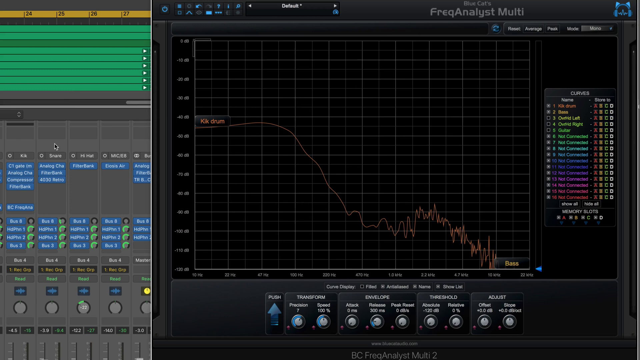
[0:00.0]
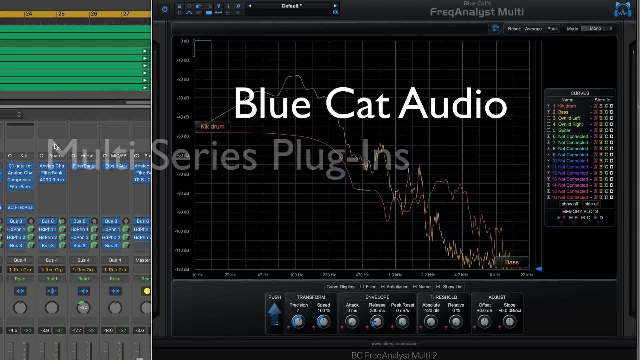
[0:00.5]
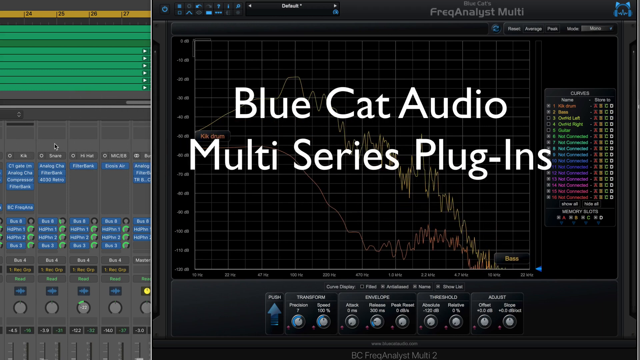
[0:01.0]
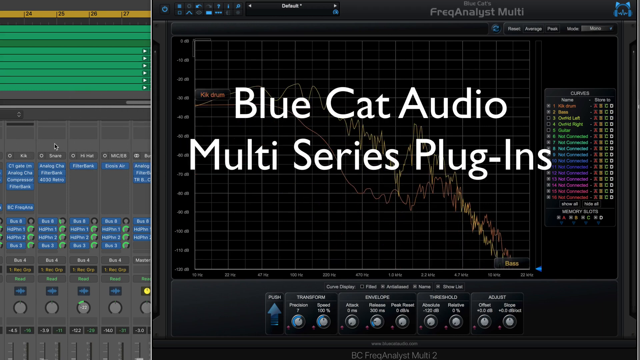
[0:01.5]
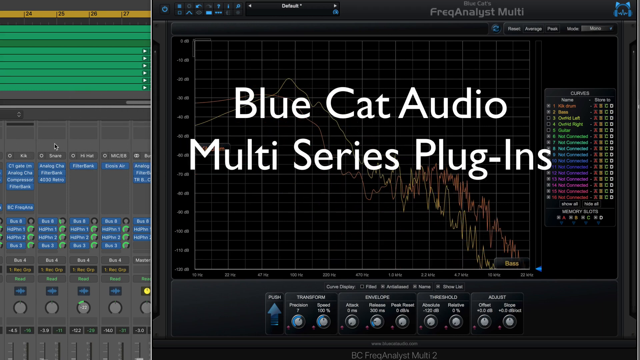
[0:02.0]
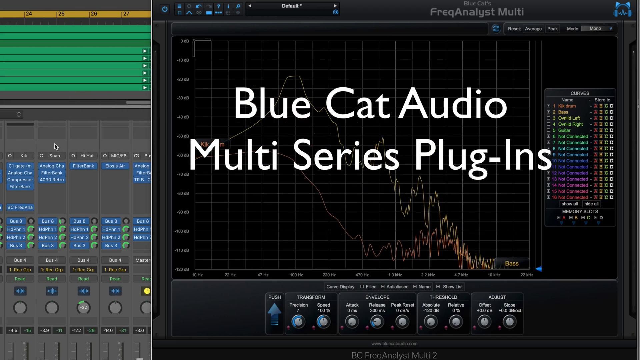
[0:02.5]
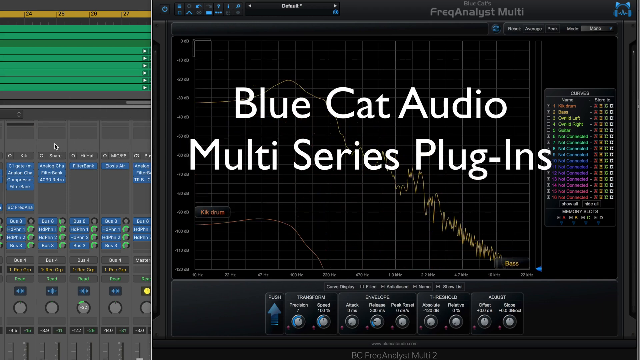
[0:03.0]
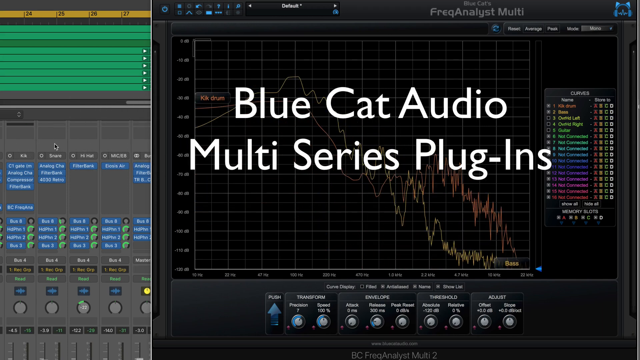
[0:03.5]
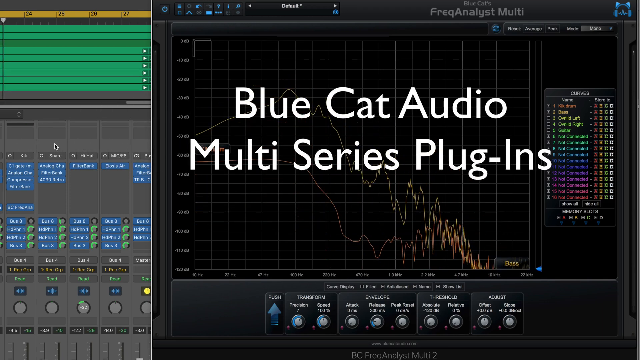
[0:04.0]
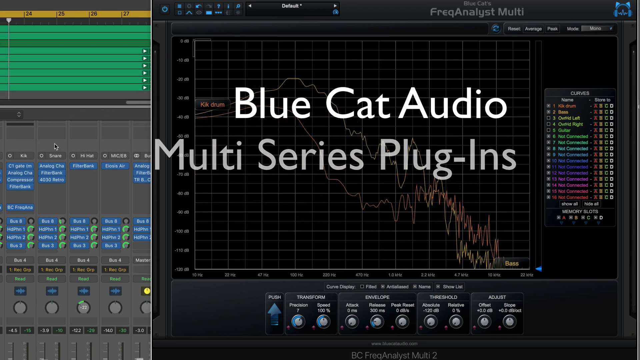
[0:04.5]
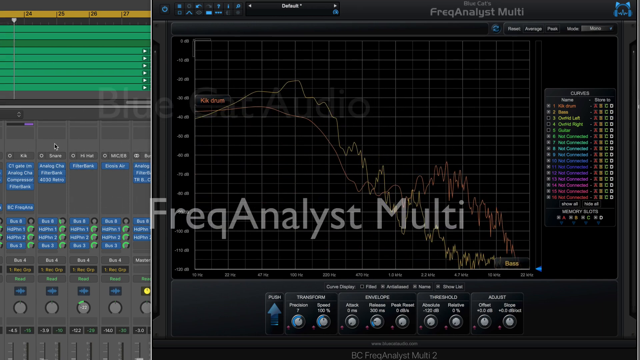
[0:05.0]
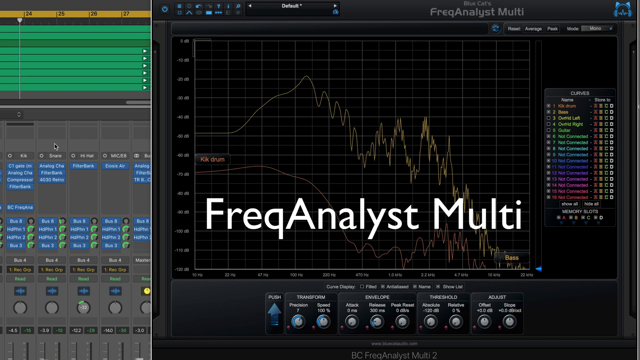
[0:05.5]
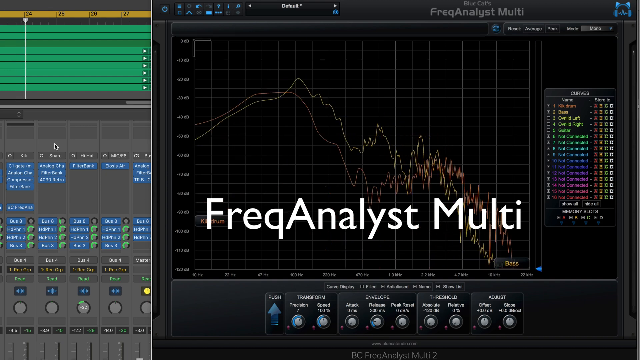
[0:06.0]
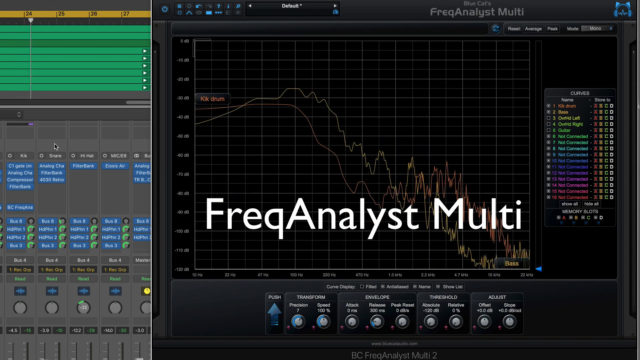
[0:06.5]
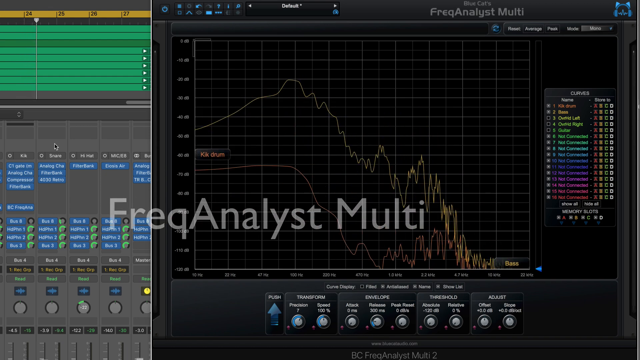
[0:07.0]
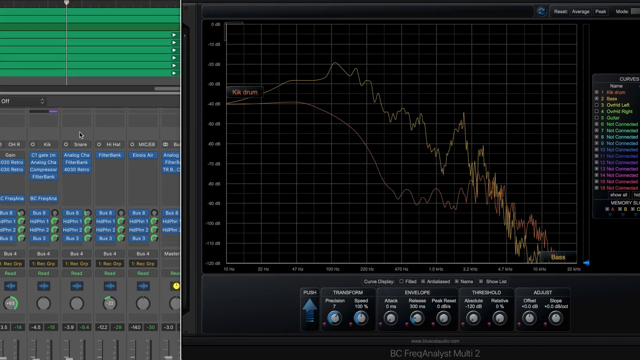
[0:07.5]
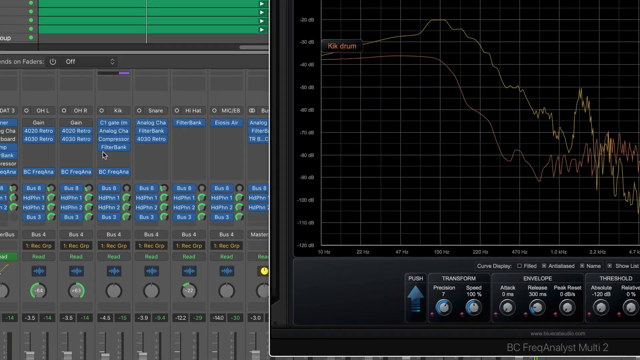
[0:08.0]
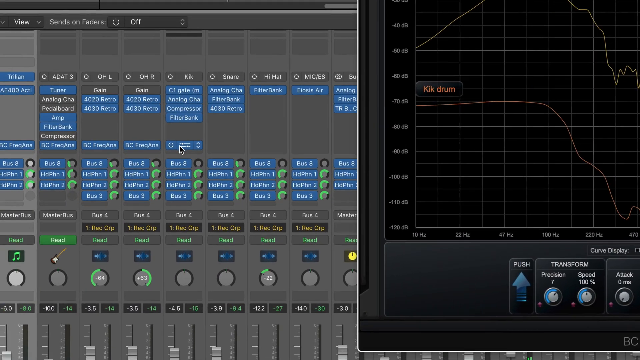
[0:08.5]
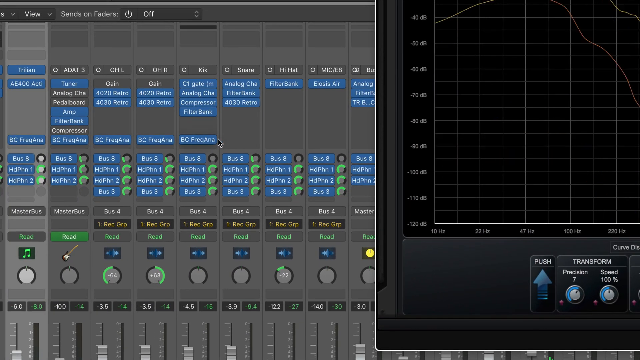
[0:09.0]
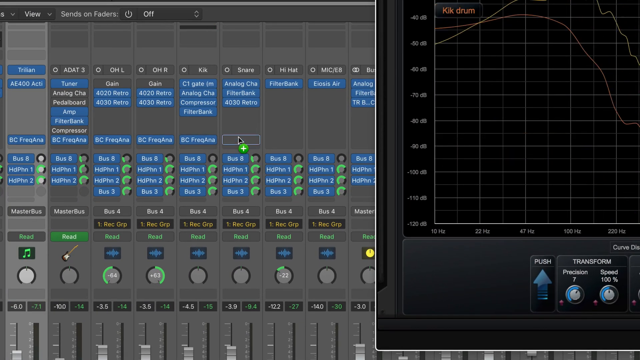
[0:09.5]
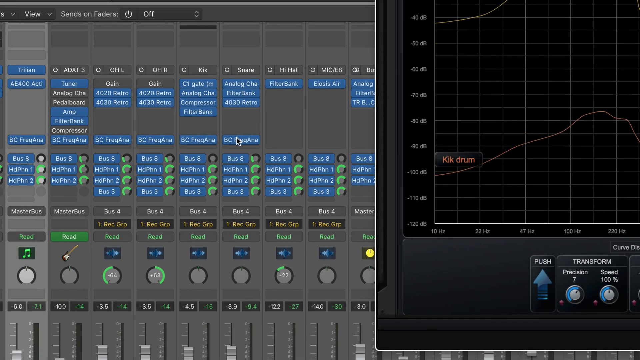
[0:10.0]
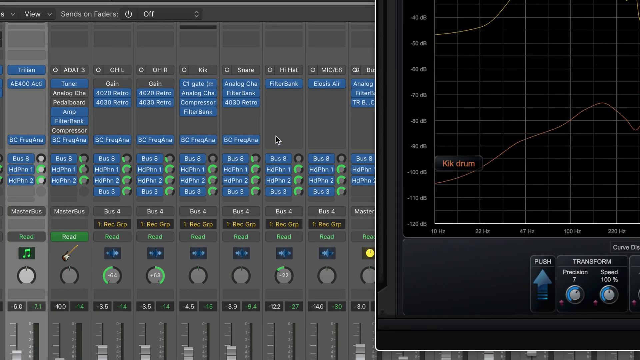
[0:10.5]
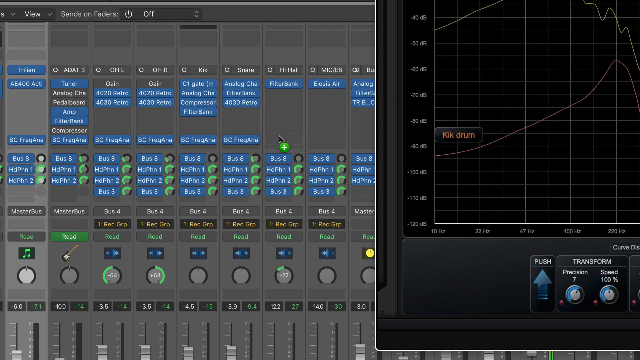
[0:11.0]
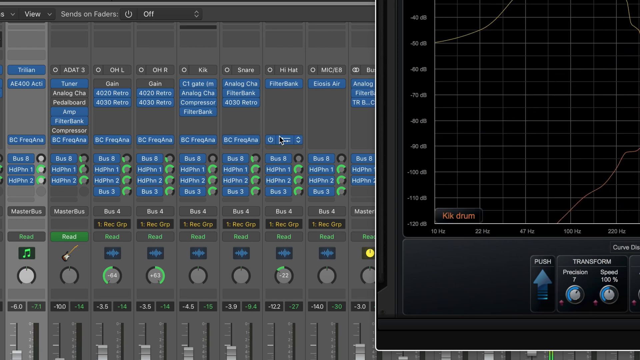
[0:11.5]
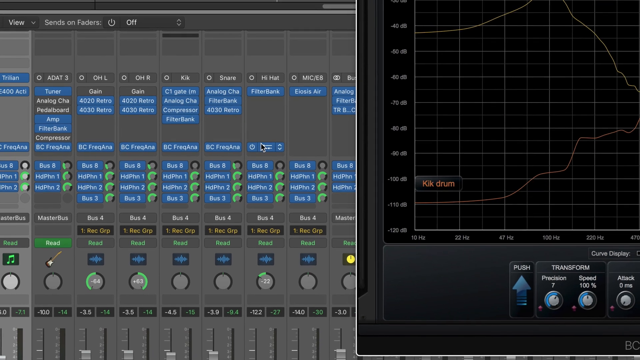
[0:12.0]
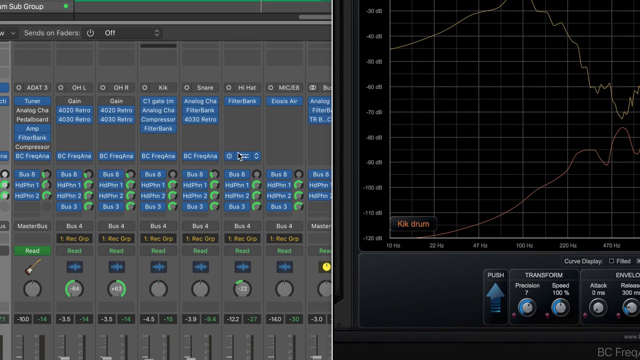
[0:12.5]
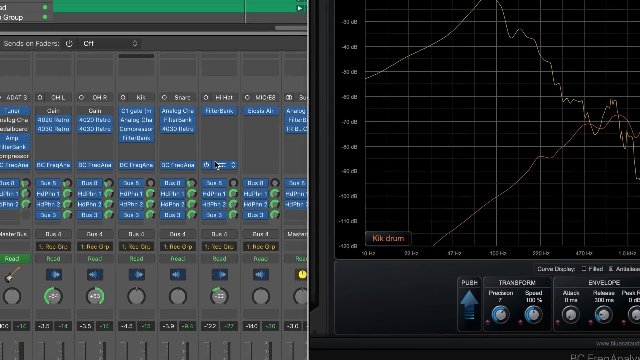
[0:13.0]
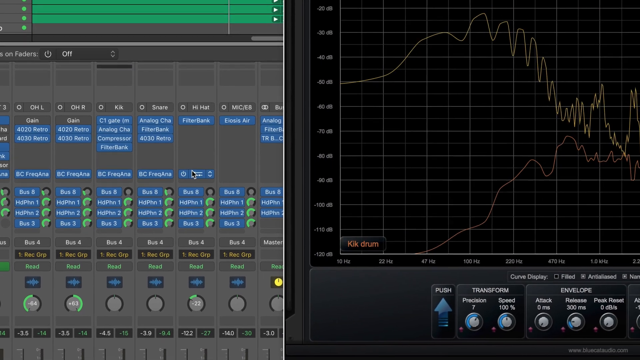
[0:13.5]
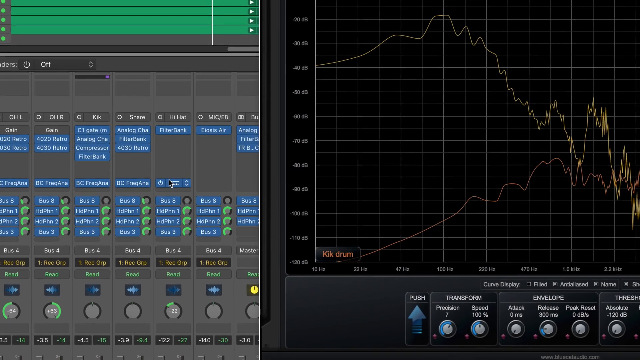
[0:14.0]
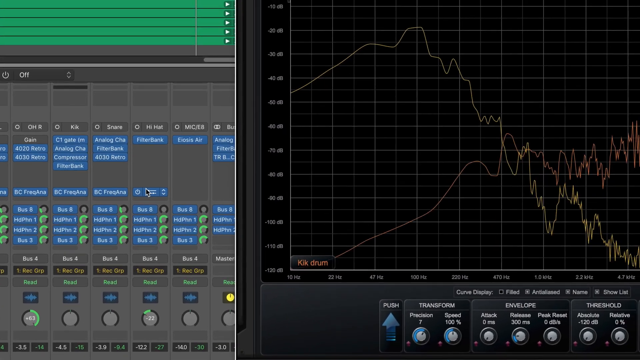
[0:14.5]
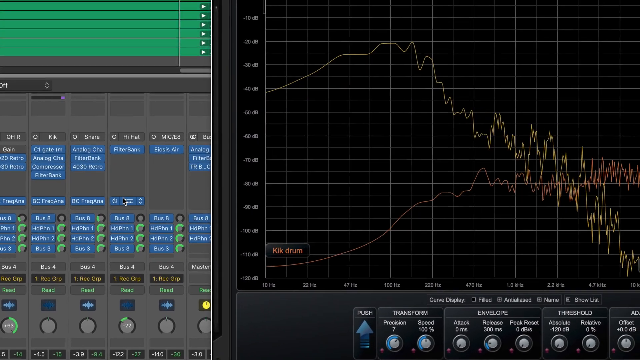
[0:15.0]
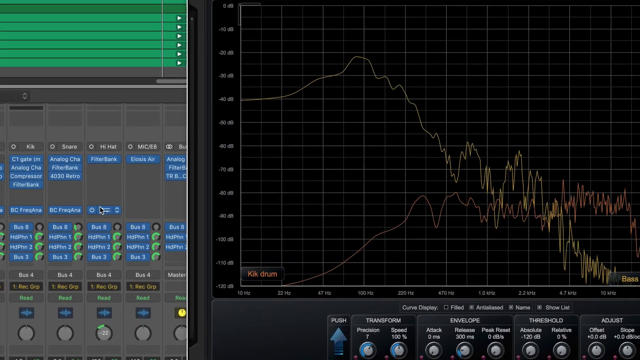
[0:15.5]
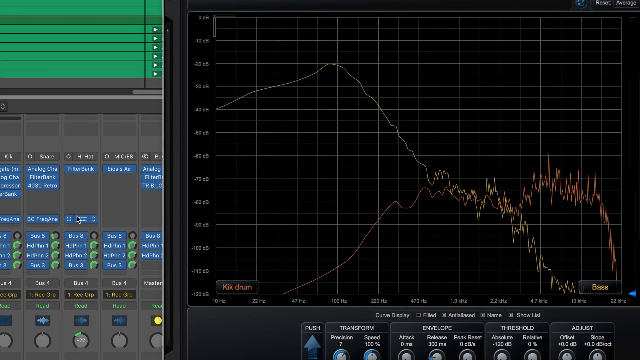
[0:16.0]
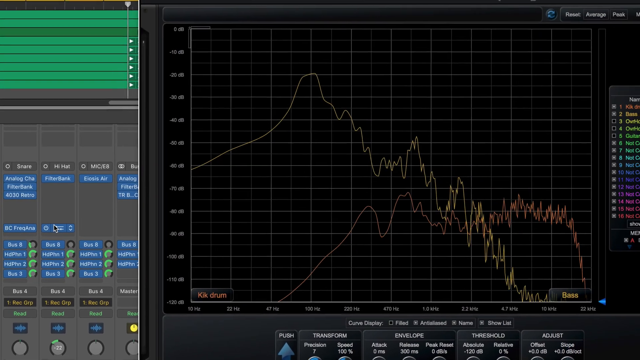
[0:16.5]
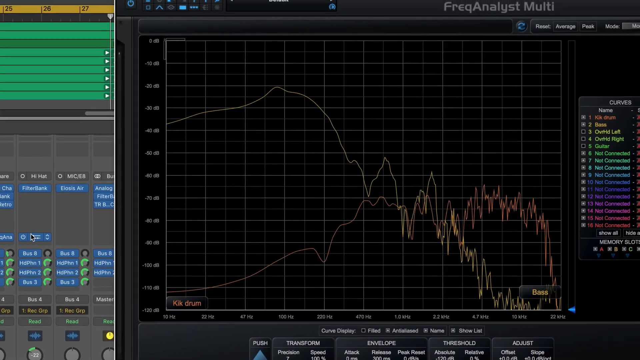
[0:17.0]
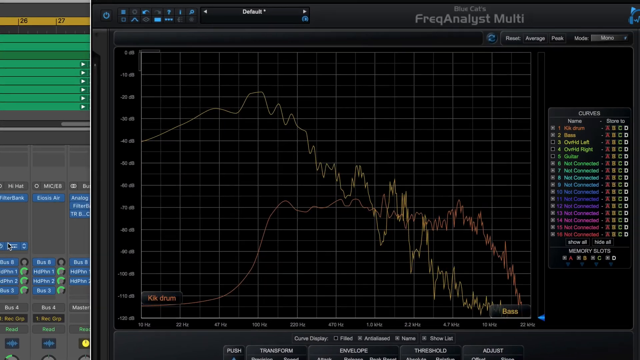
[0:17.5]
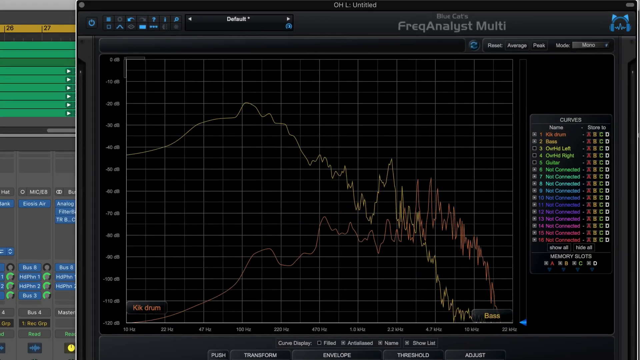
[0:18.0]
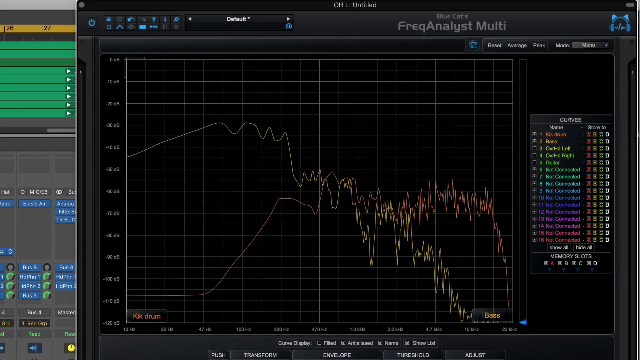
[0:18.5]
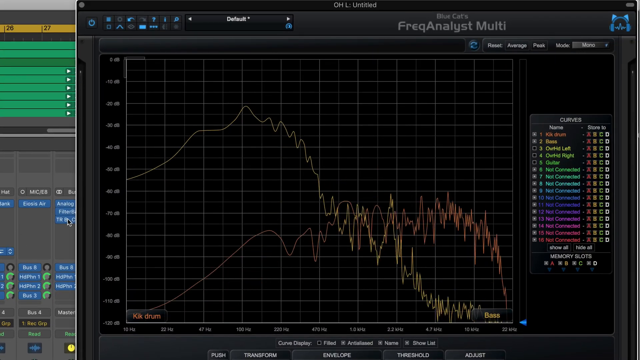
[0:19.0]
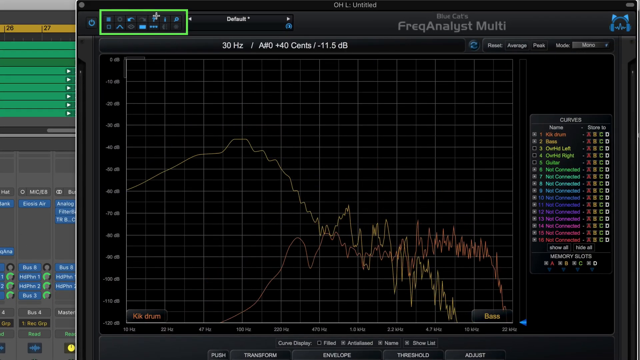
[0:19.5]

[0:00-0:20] A large rectangle fills much of the display. About a quarter of it, on the left side, has a bunch of green lines, which then give way to gray. Below are little blocks of blue with writing too small to read, arranged in two sections, and further down are gray squares with tiny, unreadable writing in the middle. At the bottom are four blue squares that almost look like start buttons. The rest of the screen looks like a chart with frequency lines that start in the middle and gradually go down, then turn squiggly, somewhat like an EKG line. Text reads "Frequency Analyst Multi." Over to the right is a little chart with a lot of different writing, colored orange, yellow, green, purple and violet, going into lighter shades of red; none of it is legible. There is more writing at the top, at the bottom and in various sections, all too small to read. It appears to be some kind of frequency meter.